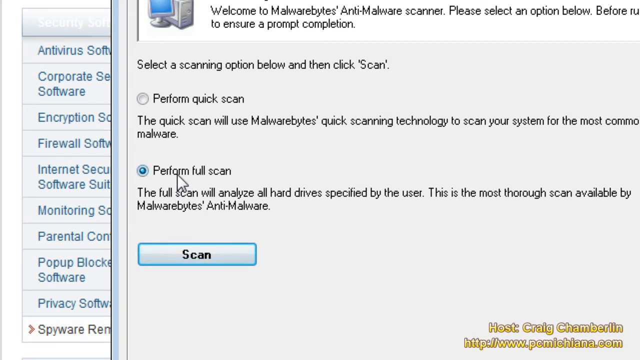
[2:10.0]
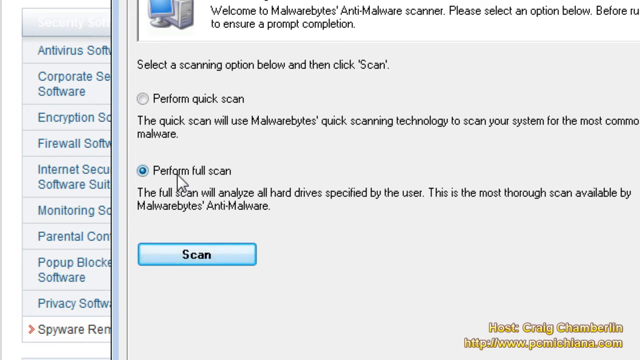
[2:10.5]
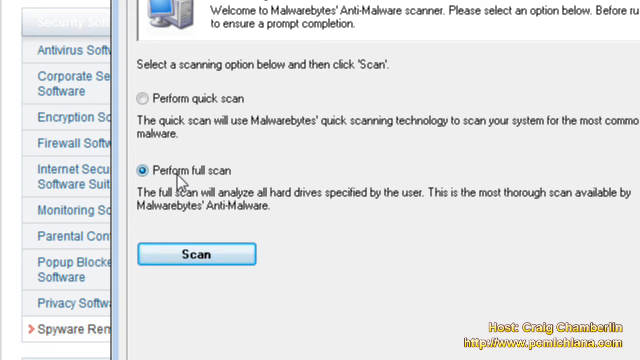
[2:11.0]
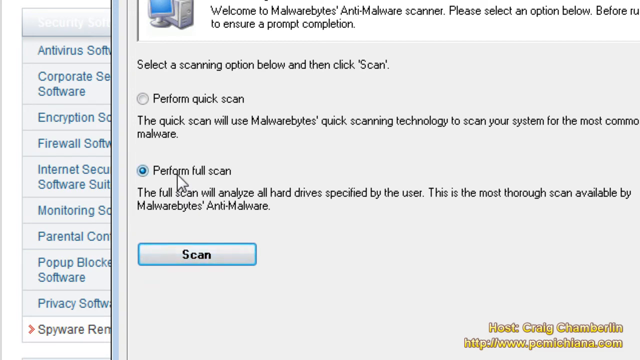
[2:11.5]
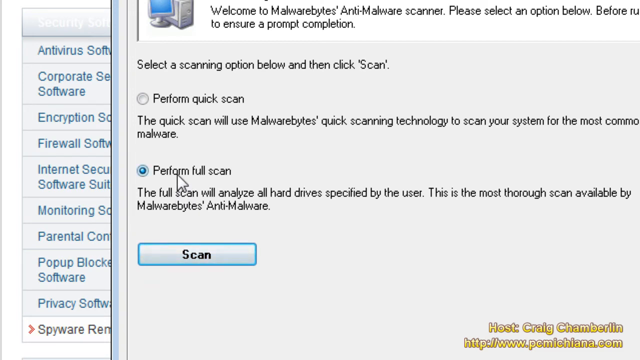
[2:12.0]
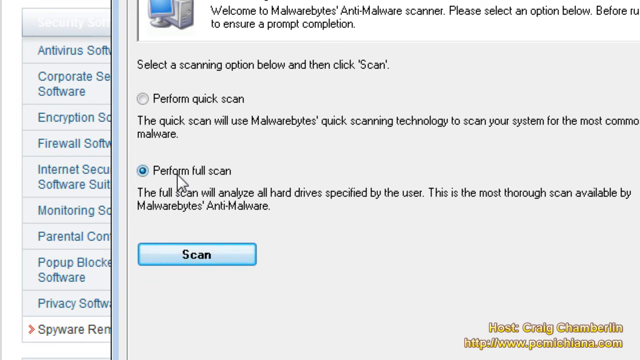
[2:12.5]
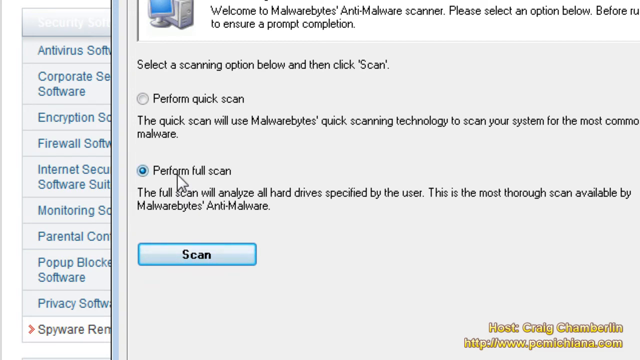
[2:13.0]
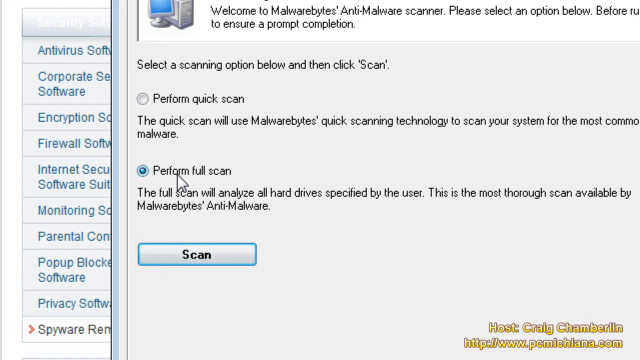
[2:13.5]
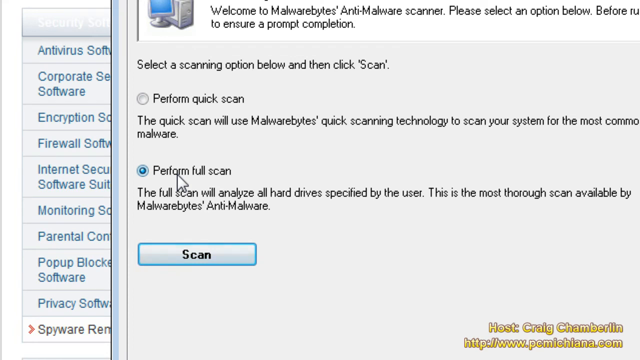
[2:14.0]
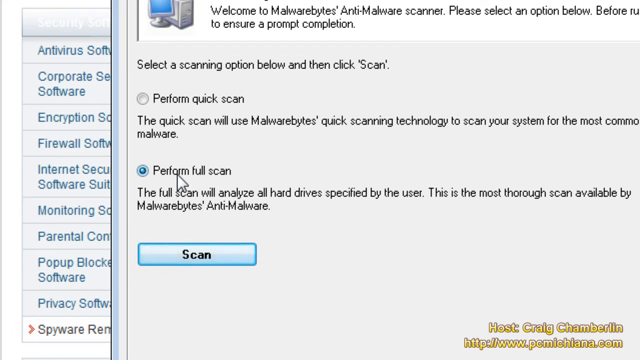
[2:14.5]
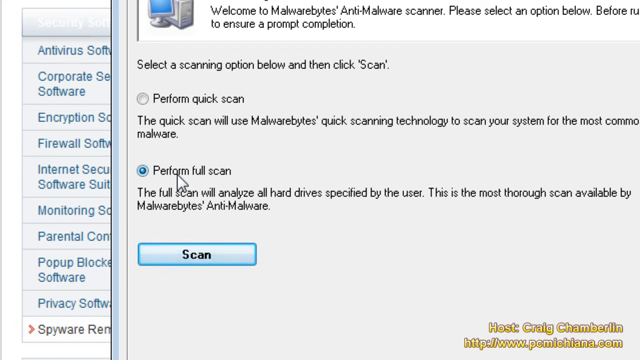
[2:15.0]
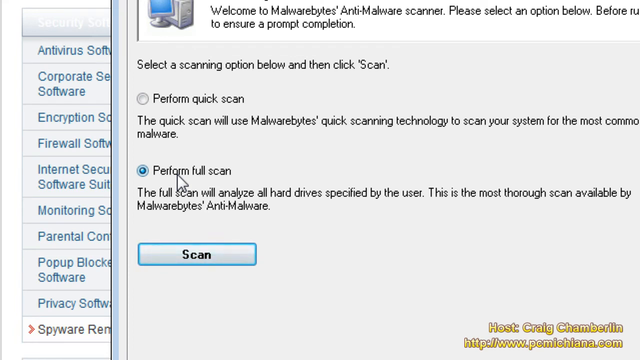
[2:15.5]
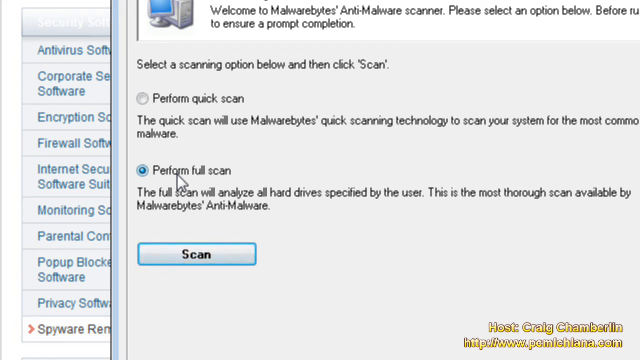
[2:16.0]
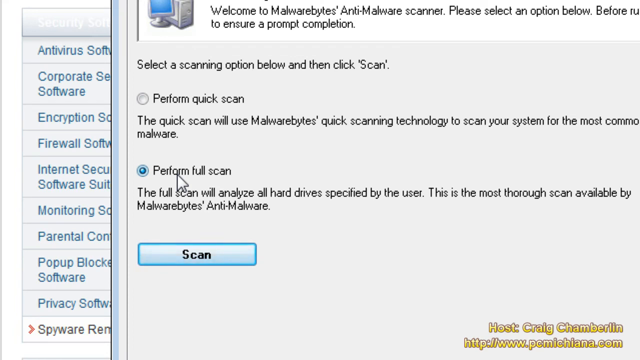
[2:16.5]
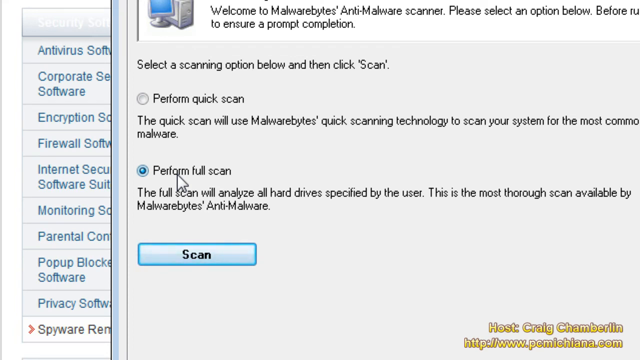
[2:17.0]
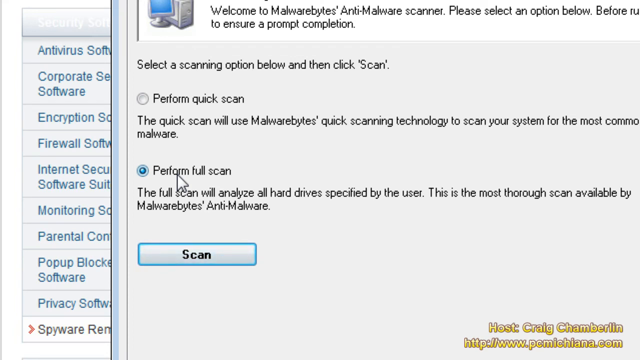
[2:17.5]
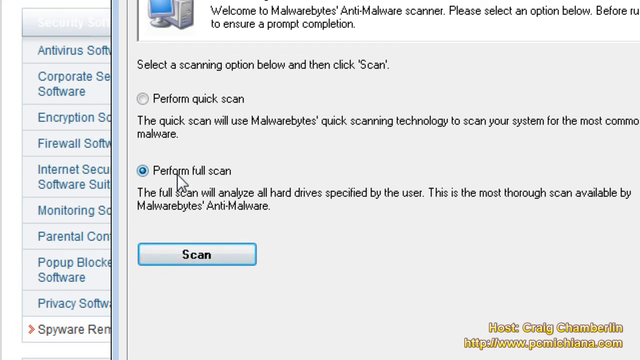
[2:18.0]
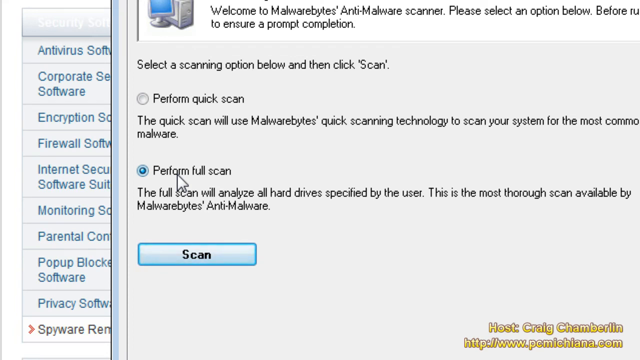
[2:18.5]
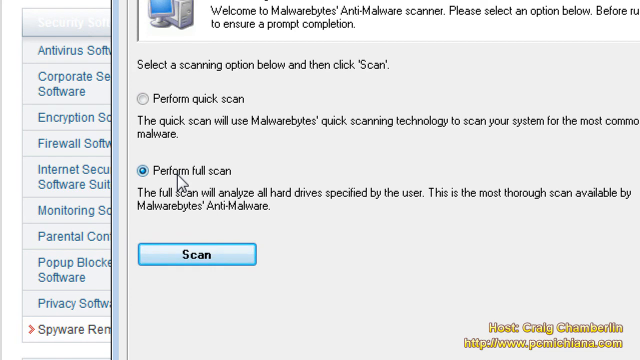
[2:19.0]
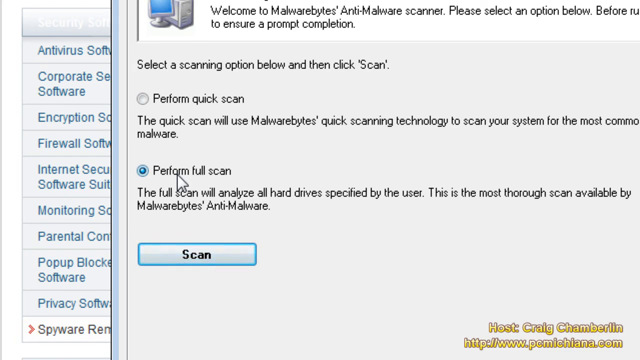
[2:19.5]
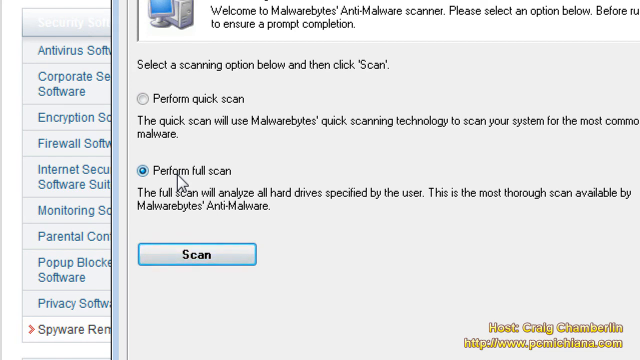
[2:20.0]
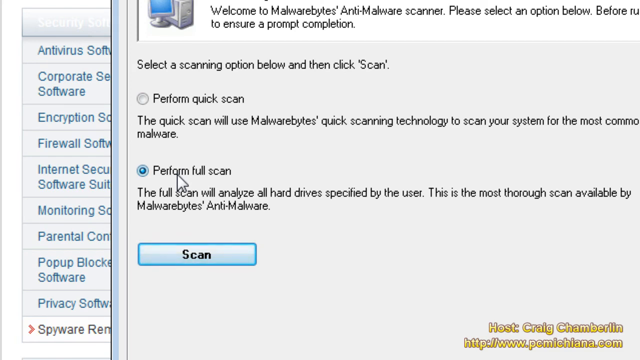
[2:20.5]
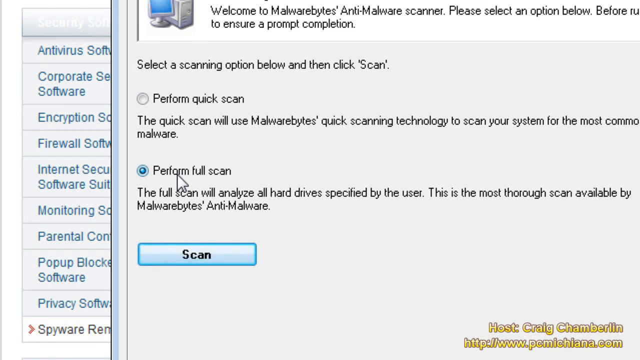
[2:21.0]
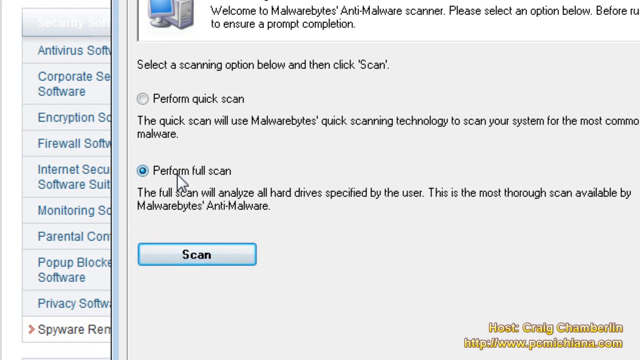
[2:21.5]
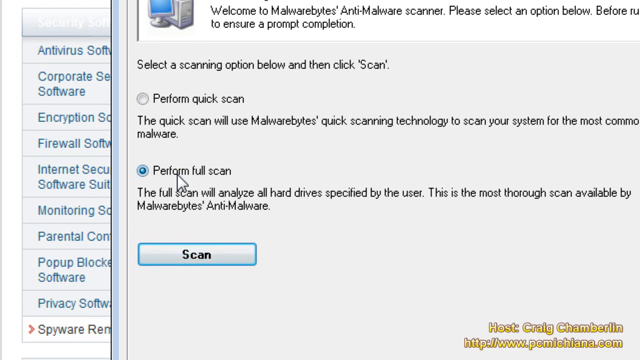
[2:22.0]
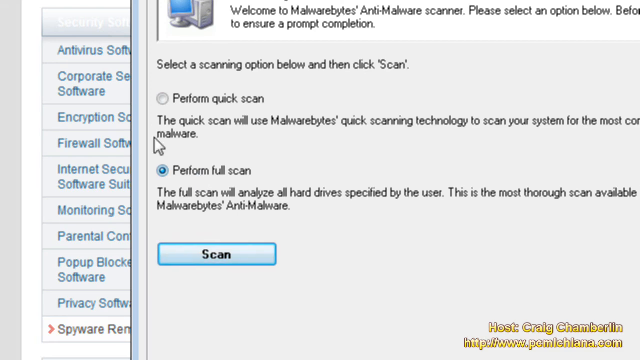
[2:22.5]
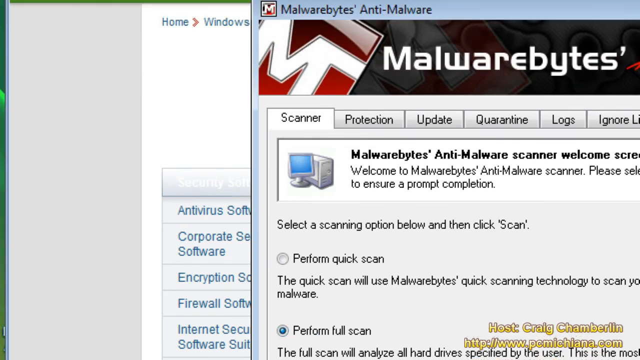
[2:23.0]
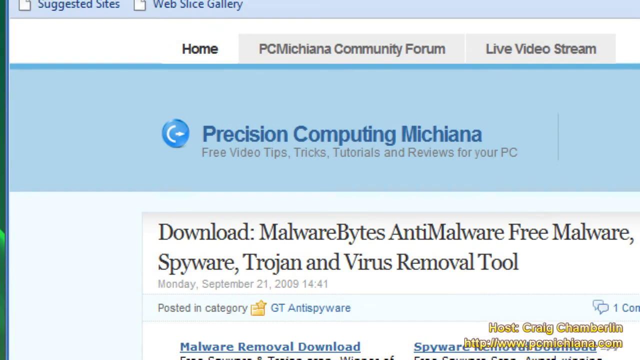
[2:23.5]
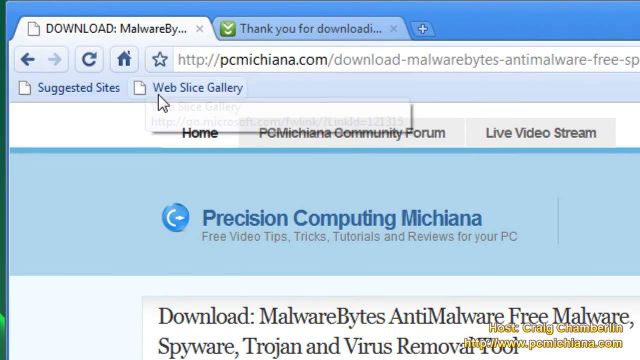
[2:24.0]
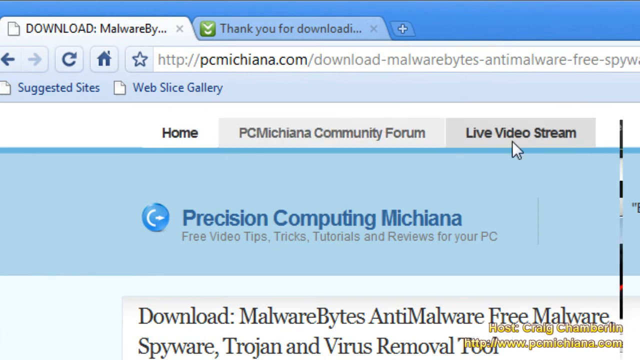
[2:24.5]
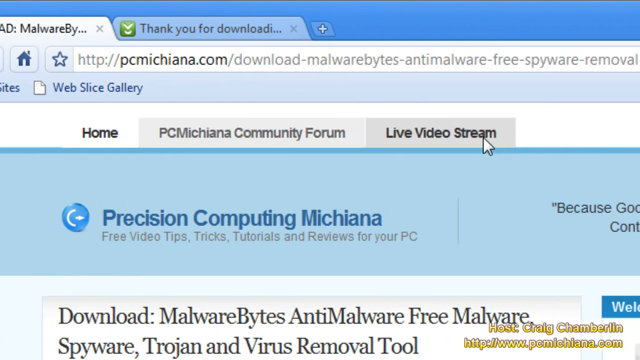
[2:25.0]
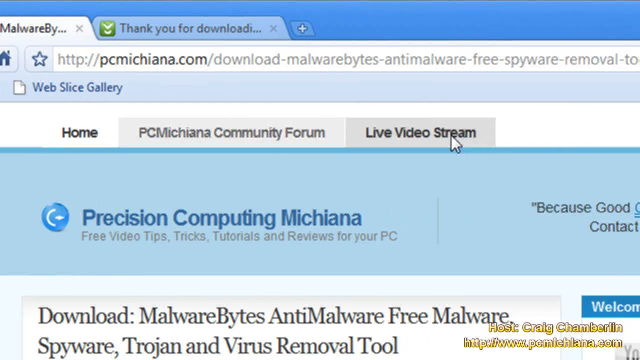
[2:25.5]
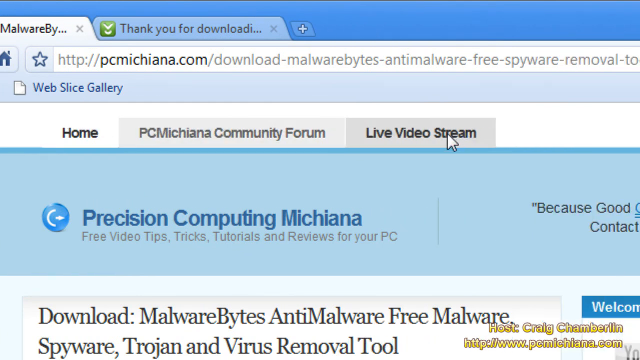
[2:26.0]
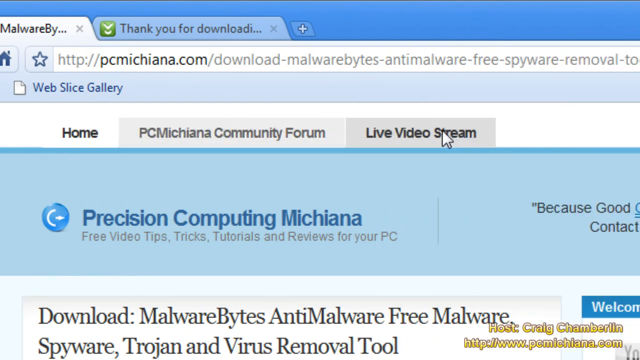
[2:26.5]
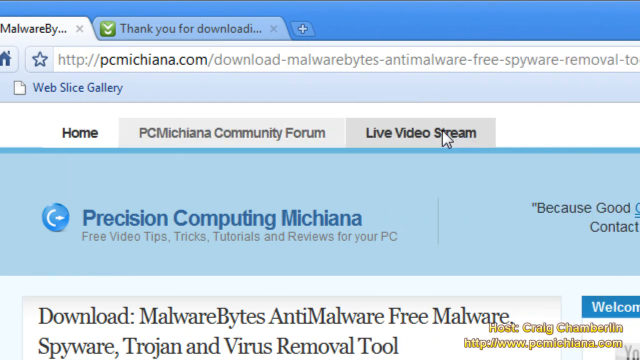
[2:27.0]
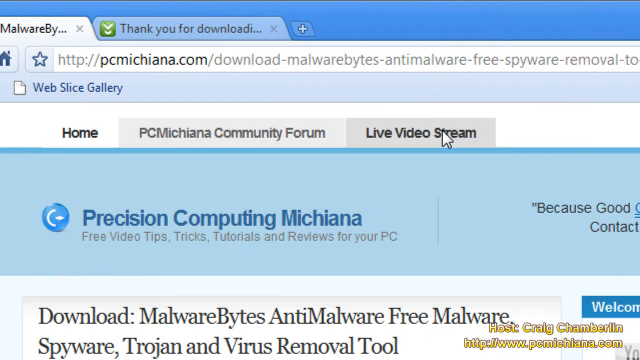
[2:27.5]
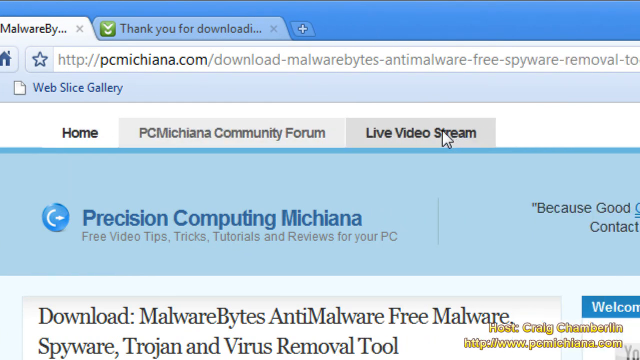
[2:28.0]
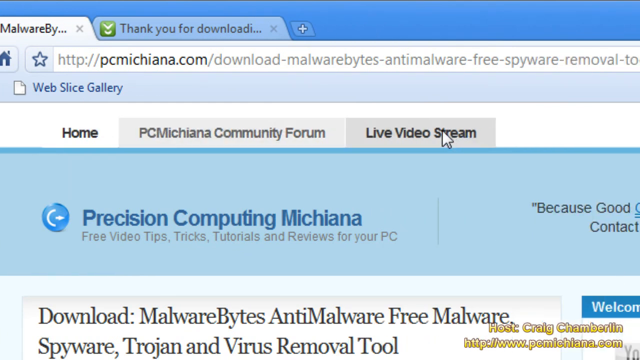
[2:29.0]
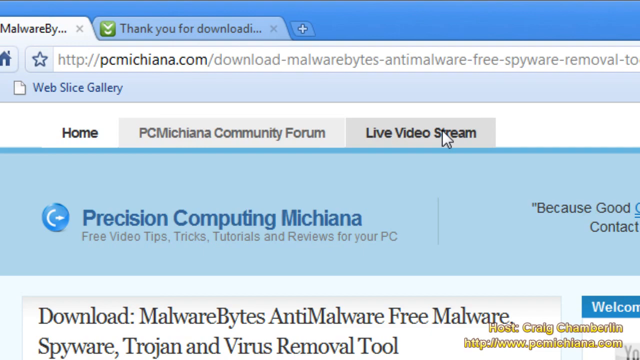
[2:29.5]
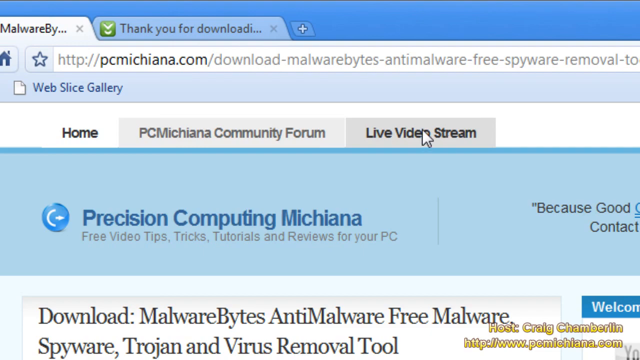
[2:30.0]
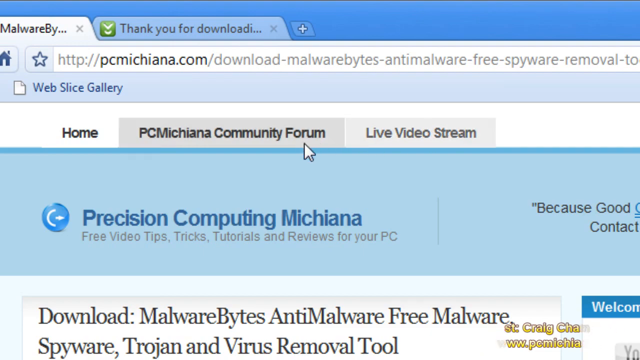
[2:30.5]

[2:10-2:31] Several buttons offer choices. One is "perform quick scan", described as a quick scan that will scan "your system for the most common malware". Another is "perform full scan", described as "the full scan will analyze all hard drives specified by the user". The person chooses the perform full scan option on the screen. "Craig Chamberlain" appears in the bottom right corner of the screen, and there is also an option that says "live video stream".